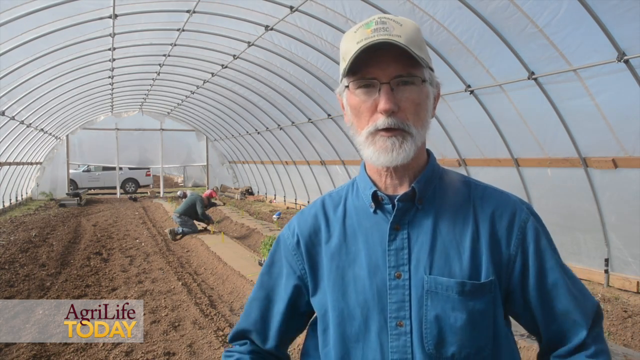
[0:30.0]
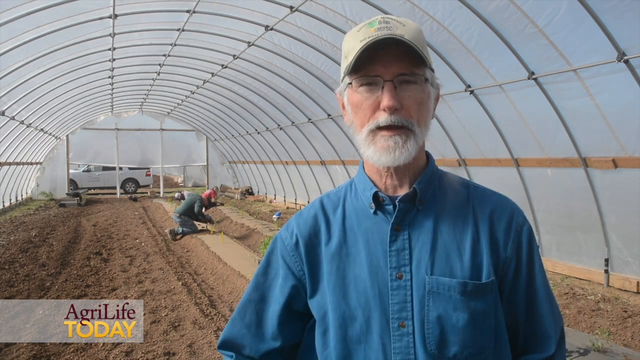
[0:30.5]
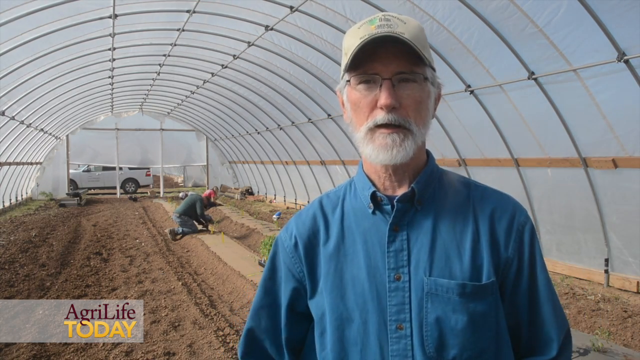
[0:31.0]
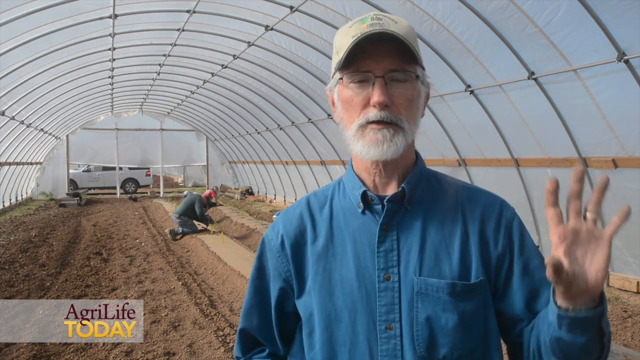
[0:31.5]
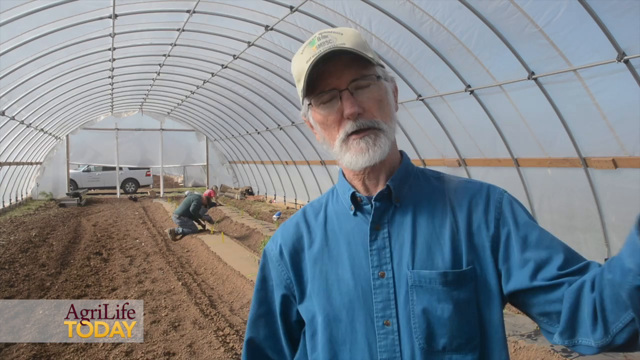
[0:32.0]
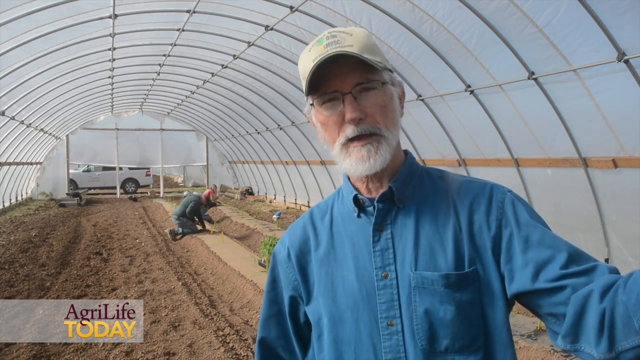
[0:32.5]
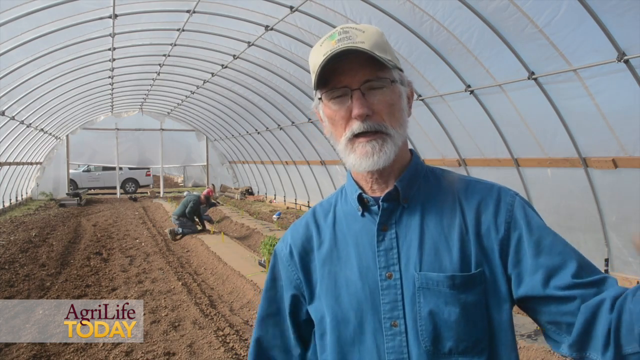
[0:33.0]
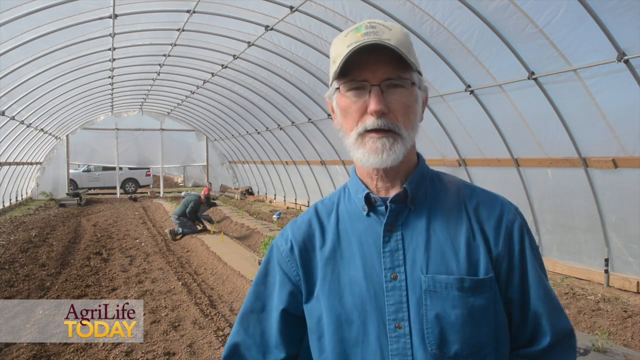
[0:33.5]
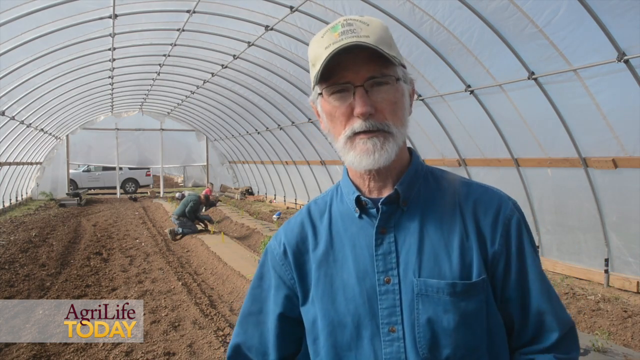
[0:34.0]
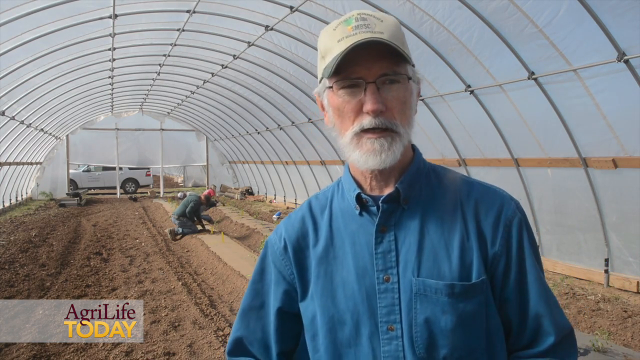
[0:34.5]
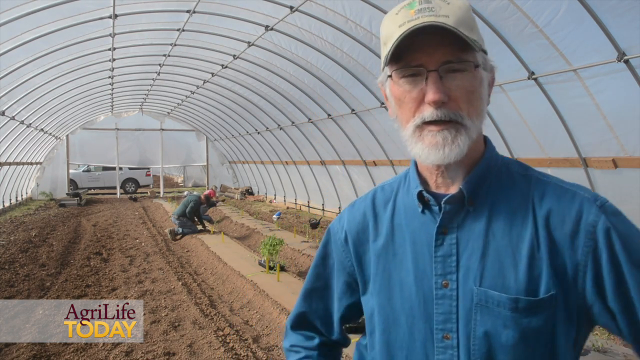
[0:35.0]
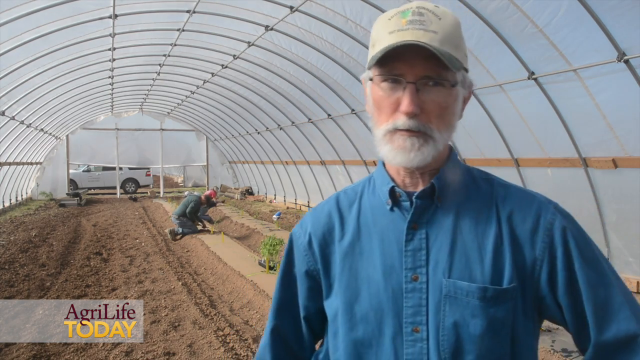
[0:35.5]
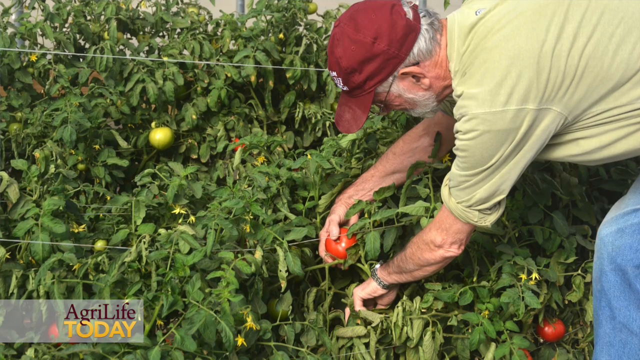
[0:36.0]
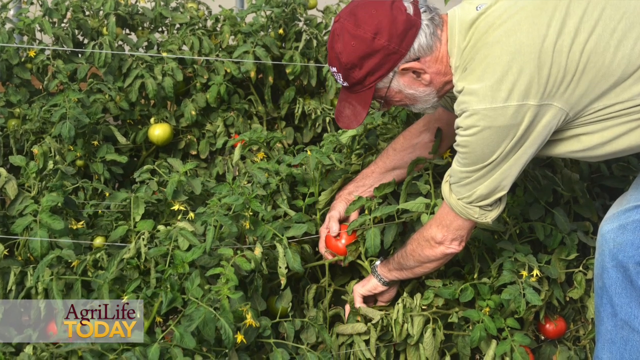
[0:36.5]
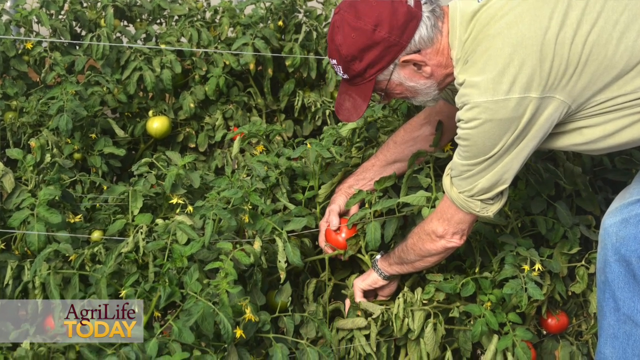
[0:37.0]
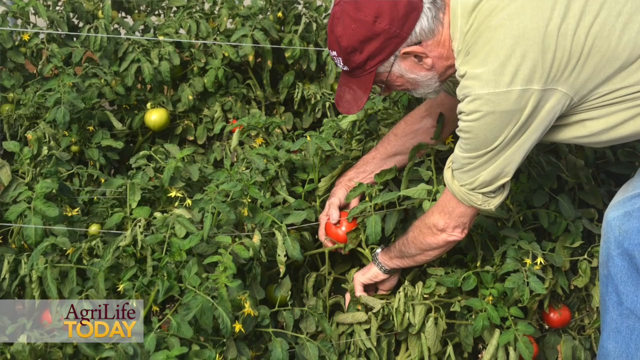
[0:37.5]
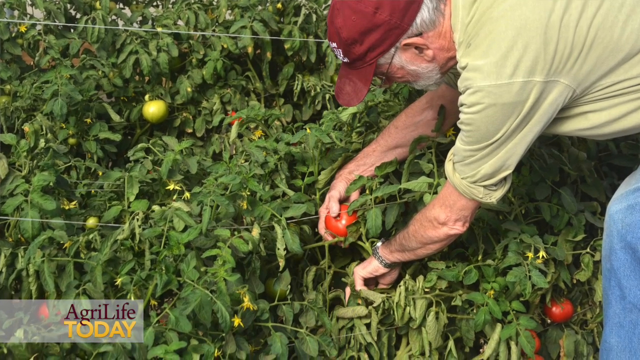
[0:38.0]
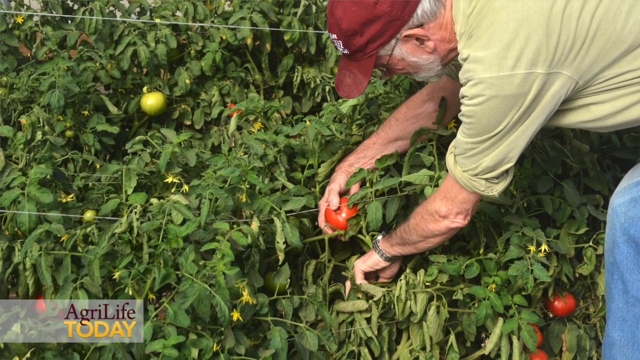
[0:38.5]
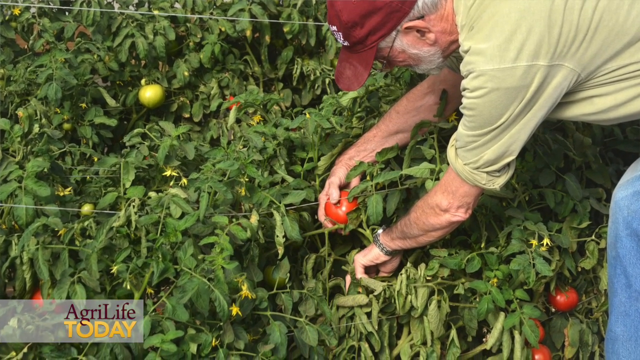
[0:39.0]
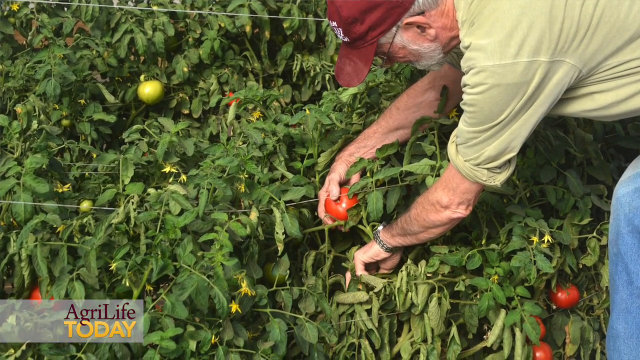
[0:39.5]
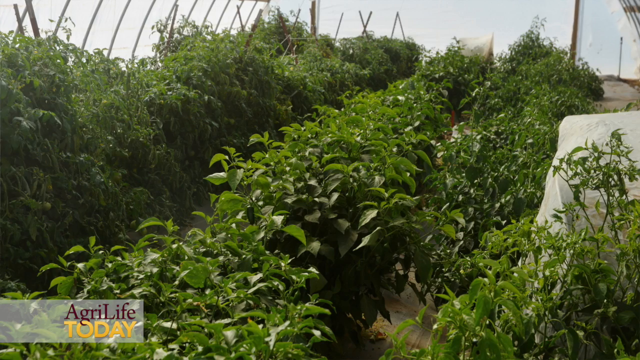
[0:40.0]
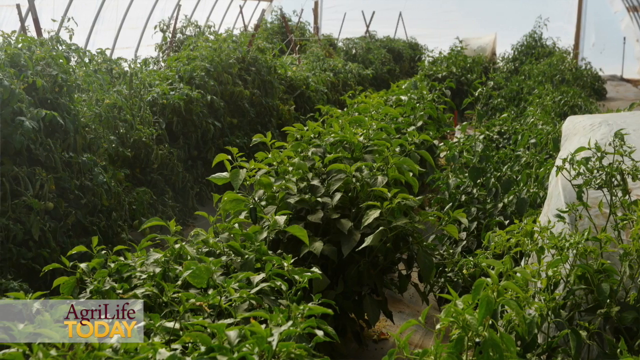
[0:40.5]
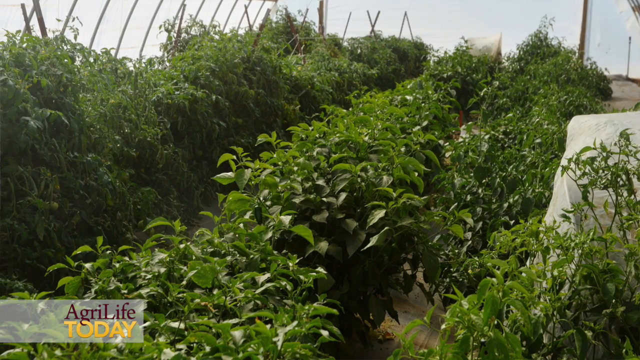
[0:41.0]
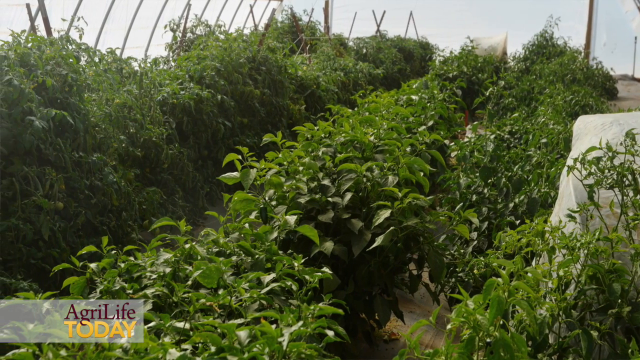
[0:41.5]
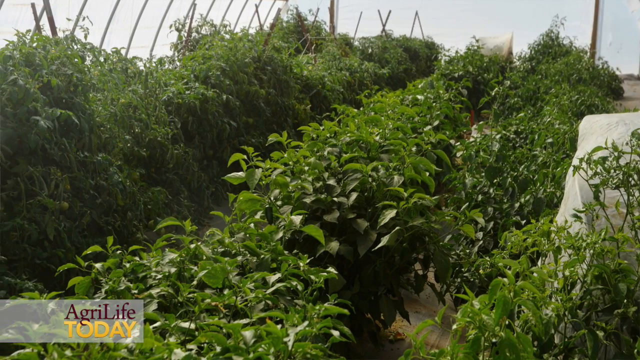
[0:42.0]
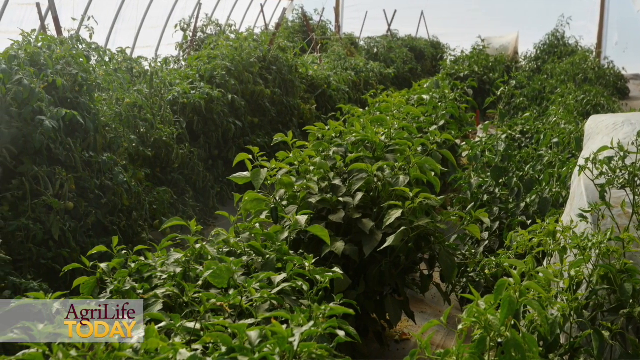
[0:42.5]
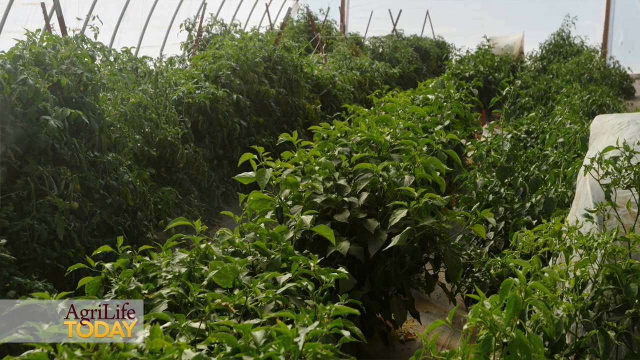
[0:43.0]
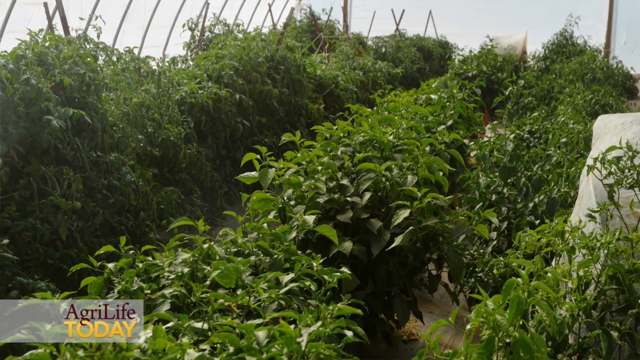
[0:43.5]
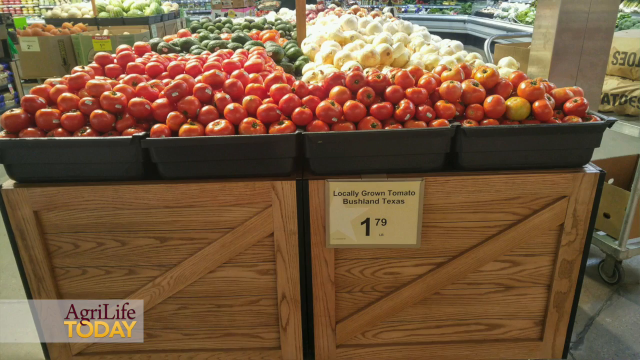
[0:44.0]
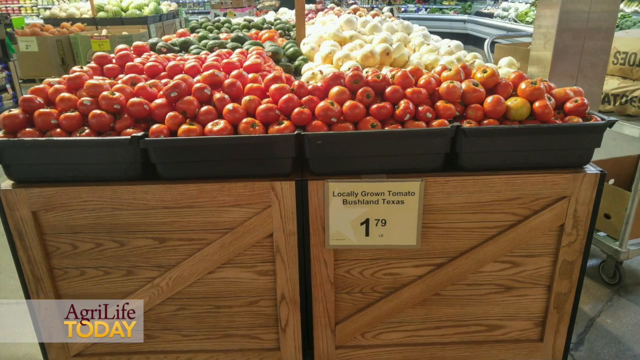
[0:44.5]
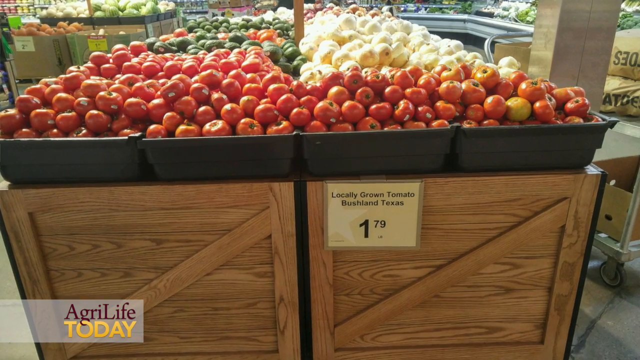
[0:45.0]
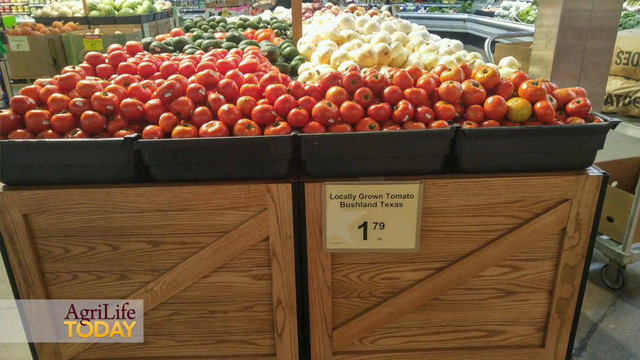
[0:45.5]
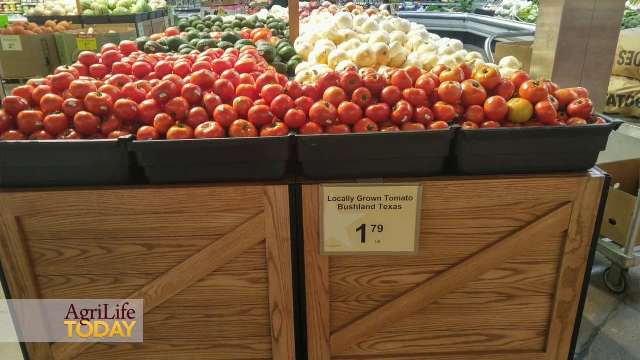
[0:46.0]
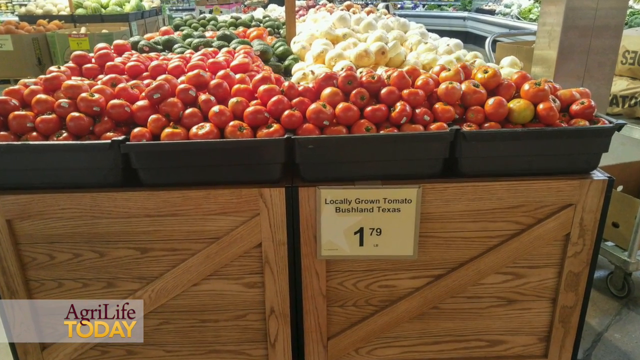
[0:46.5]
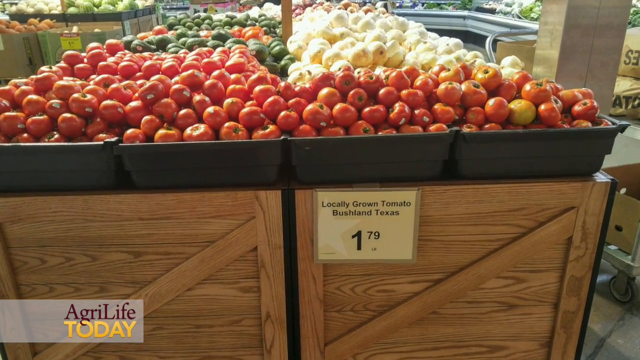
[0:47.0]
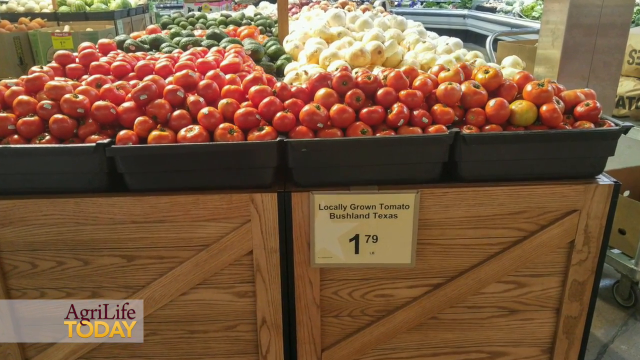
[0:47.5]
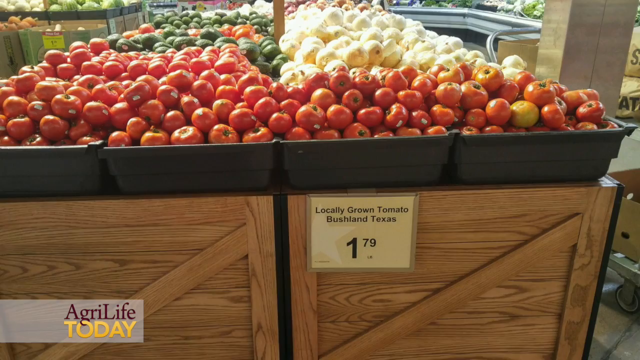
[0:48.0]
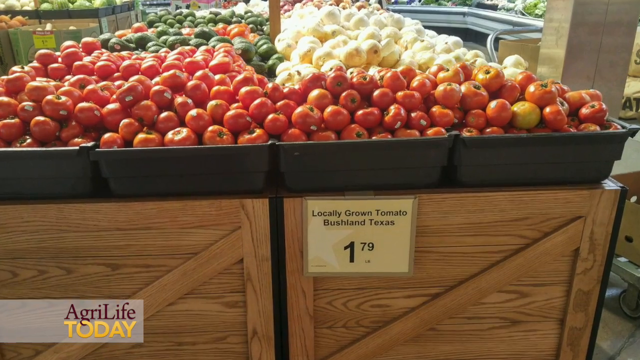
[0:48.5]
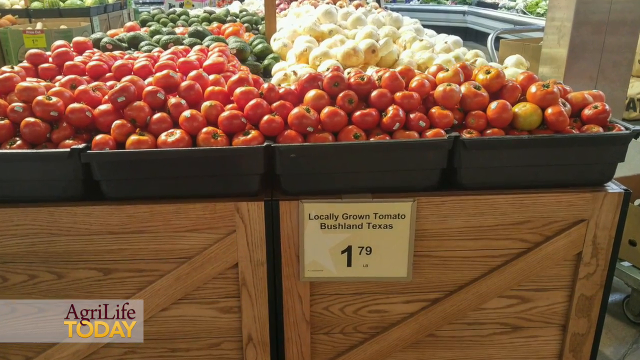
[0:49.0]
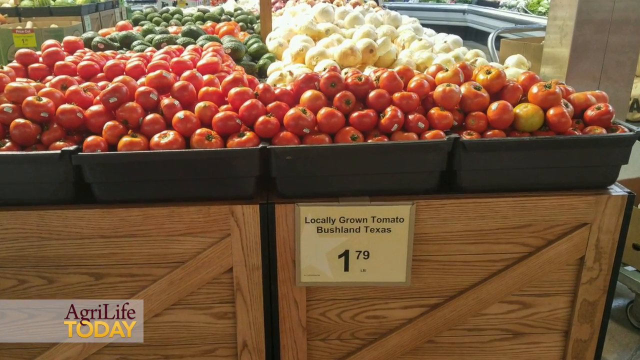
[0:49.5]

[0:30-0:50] A man in a greenhouse is very close to the camera, talking animatedly at it. He is an older man with a white beard and glasses, wearing a blue long-sleeved shirt with the top button undone and a neutral, creamy-coloured baseball cap with a brown cap at the front. He appears to be perhaps explaining something, his arm moving around expressively. Behind him in the greenhouse, a man appears to be perhaps planting some plants or tending to the soil. The video then switches to what appears to be the same man in a different baseball cap, picking tomatoes off tomato plants. Images of lots of fully grown tomato plants follow, and then the video switches to what looks like a shop selling the tomatoes, with four big boxes full of tomatoes. Underneath the tomatoes is a sign that says "locally grown tomatoes, Bushland, Texas 179".